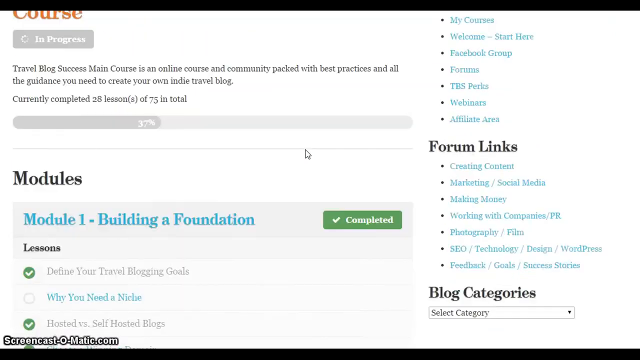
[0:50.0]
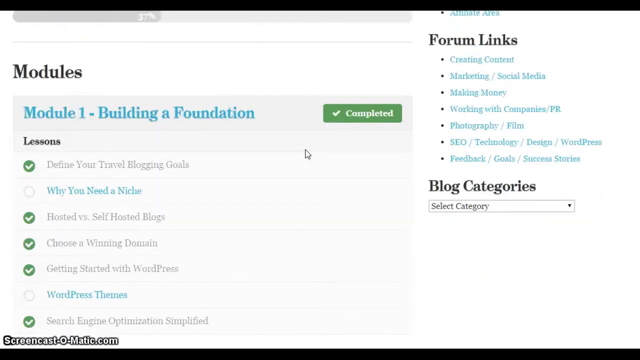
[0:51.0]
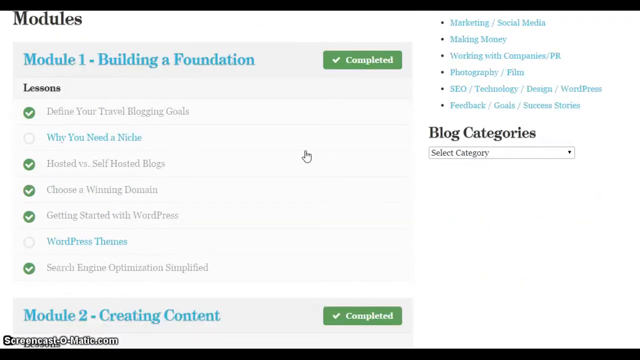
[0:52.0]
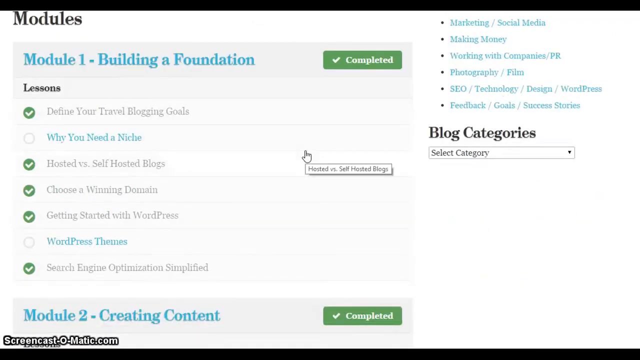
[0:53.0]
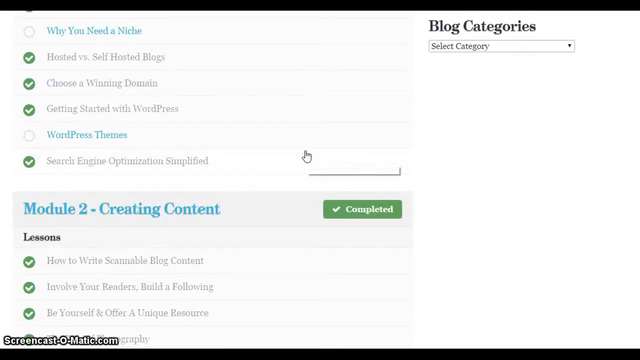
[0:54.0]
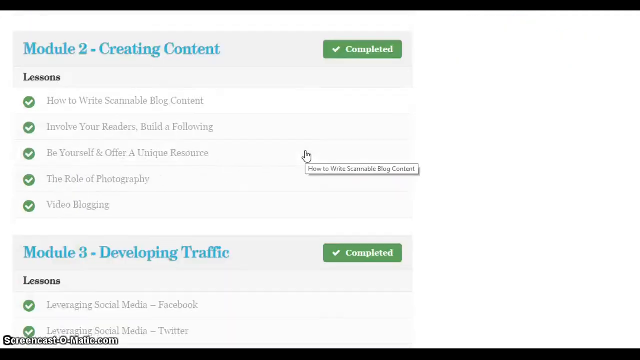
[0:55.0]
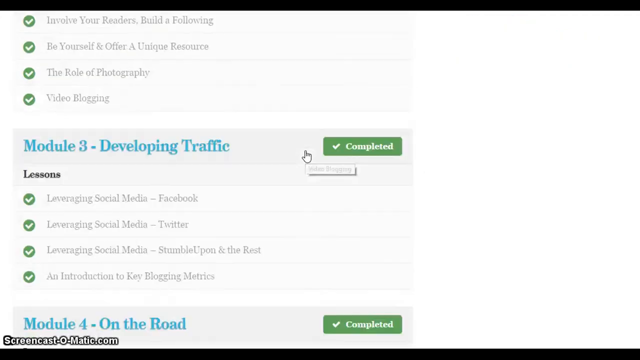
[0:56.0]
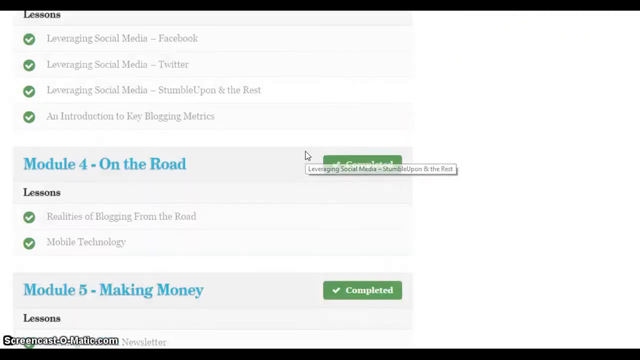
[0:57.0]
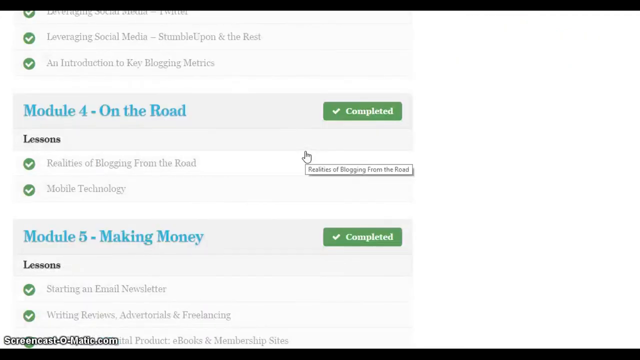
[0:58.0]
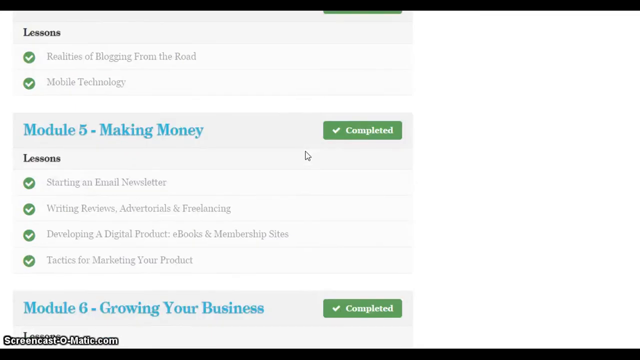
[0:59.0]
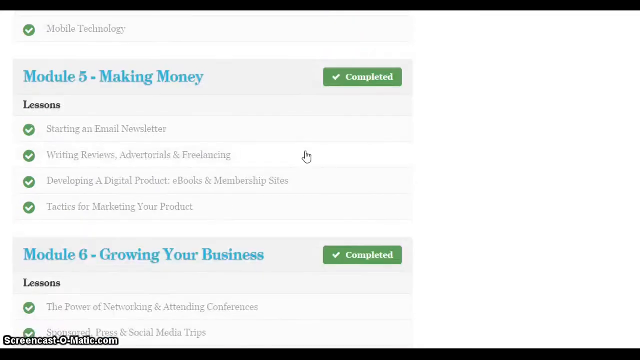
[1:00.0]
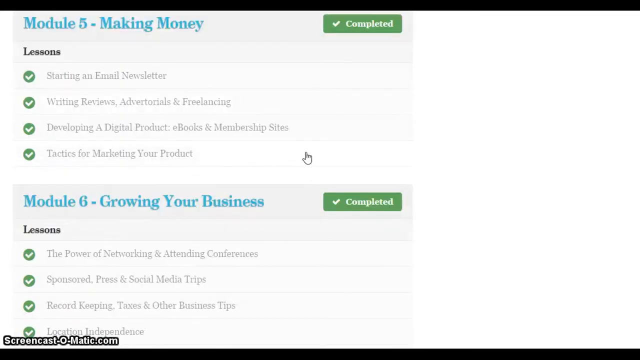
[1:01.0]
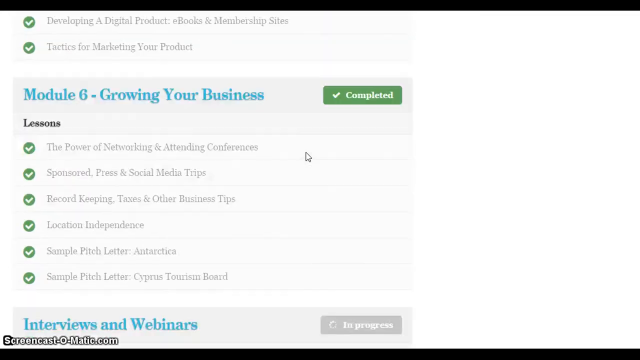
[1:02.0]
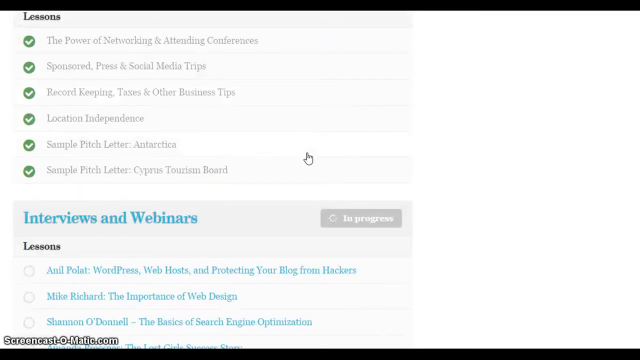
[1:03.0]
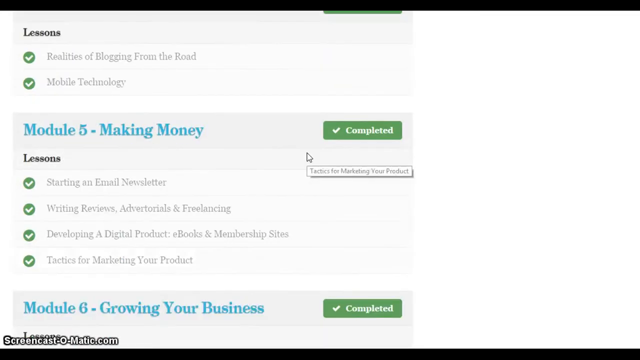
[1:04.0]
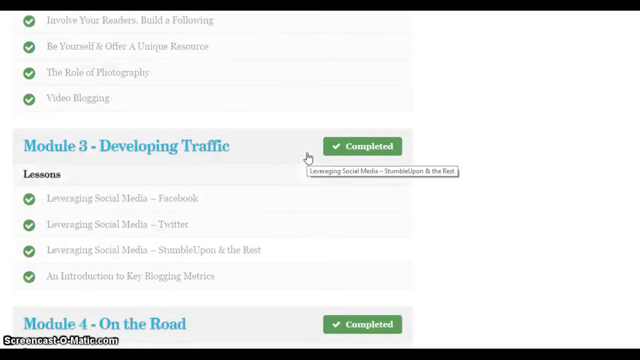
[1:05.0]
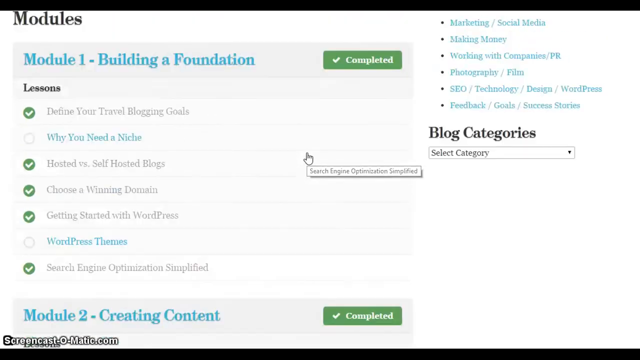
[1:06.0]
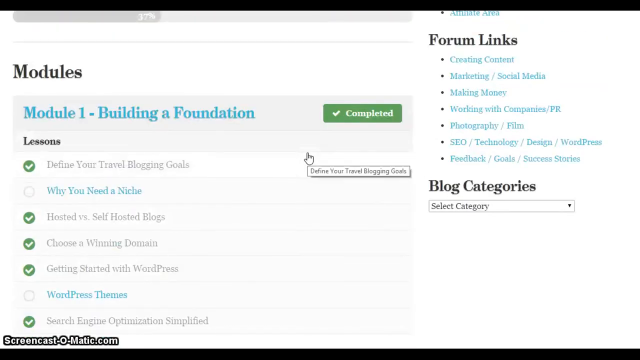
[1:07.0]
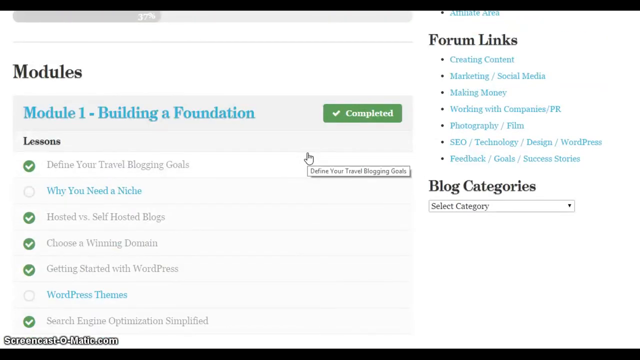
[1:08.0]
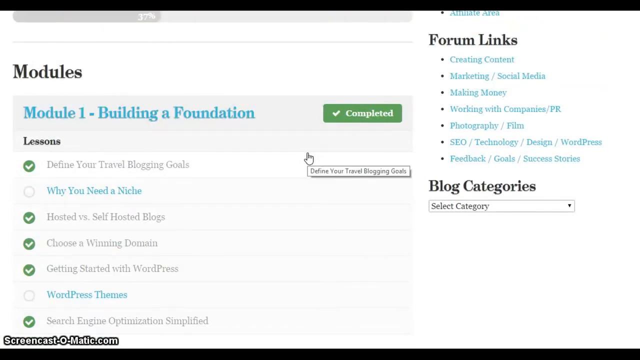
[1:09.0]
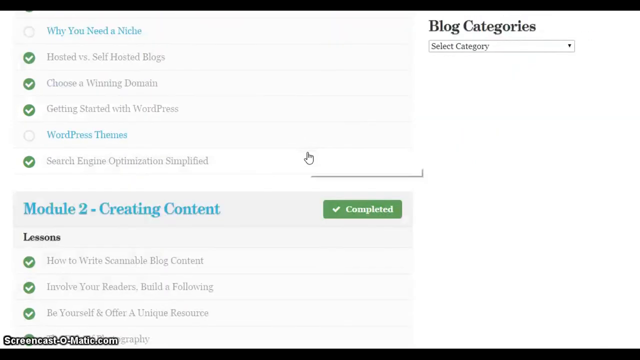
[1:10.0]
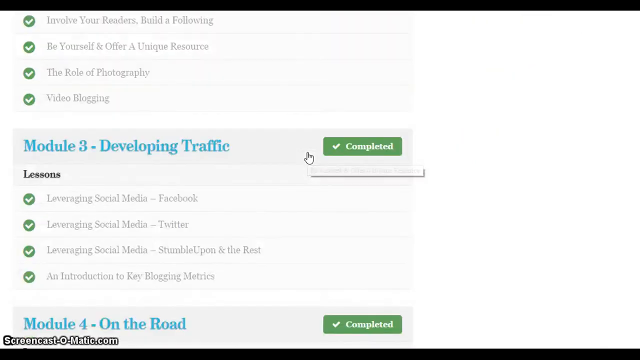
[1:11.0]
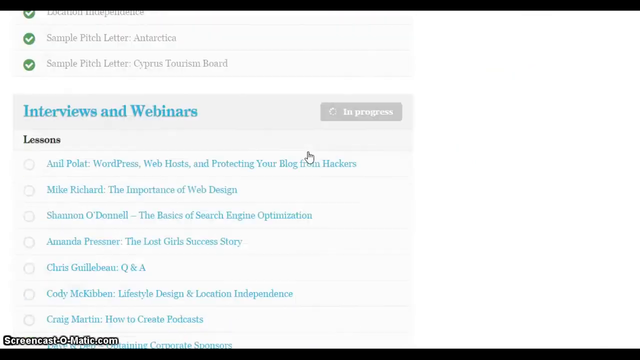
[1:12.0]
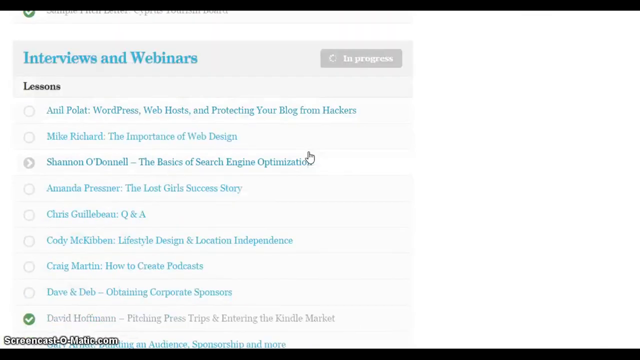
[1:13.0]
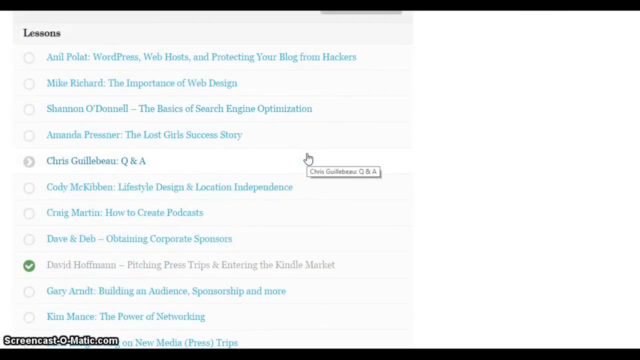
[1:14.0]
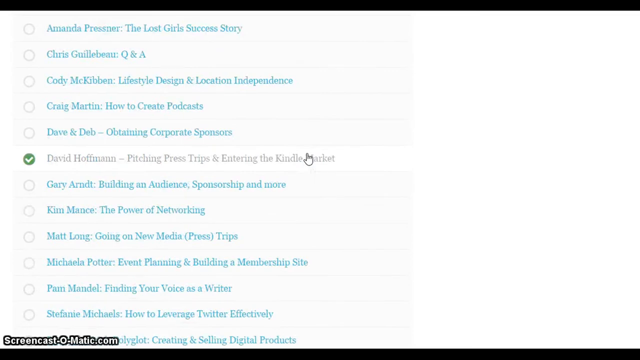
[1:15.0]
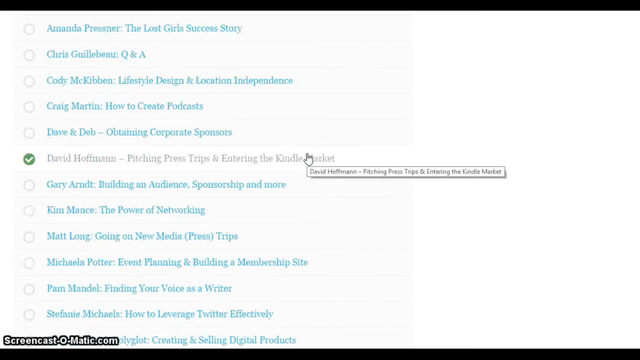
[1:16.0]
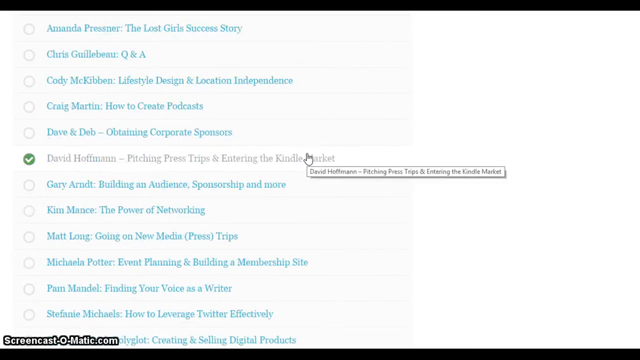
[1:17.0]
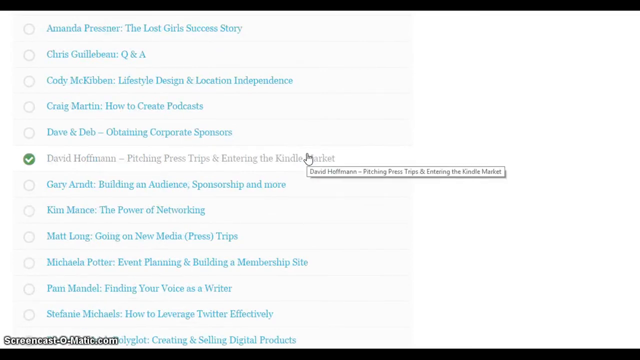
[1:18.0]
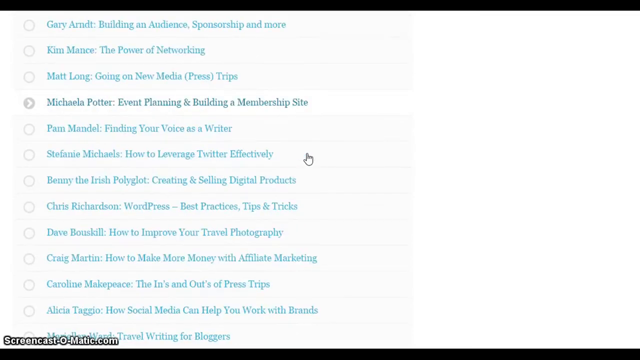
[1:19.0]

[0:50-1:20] The modules are shown, broken down into six sections. The first is called building a foundation, the second creating content, the third developing traffic, and the fourth on the road. Each section is broken down further into lessons that can be clicked on. For example, module five, making money, includes starting an email newsletter, writing reviews and advertorials, freelancing, developing a digital product, e-books and membership sites, and tactics for making your product. In module one, "why you need a niche" is highlighted, and the module also lists define your travel blogging goals and hosted versus self-hosted blogs.